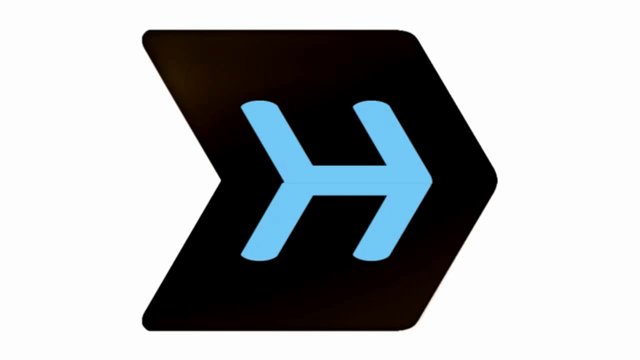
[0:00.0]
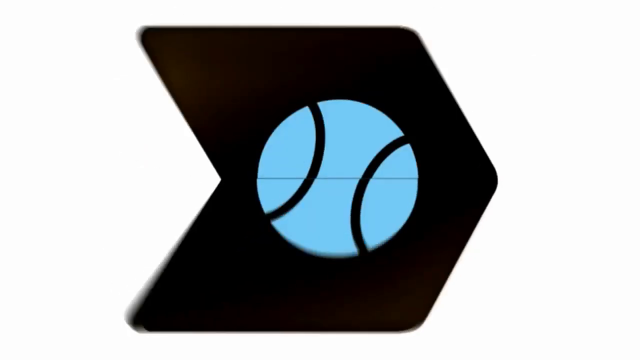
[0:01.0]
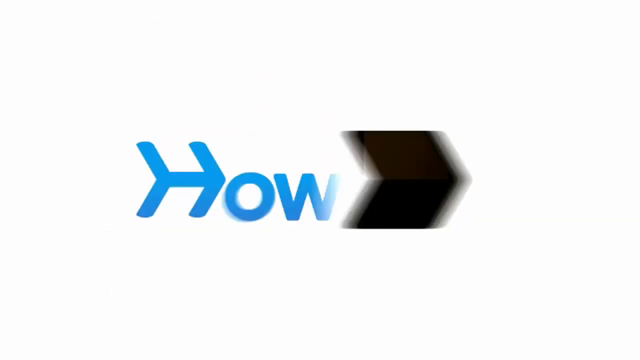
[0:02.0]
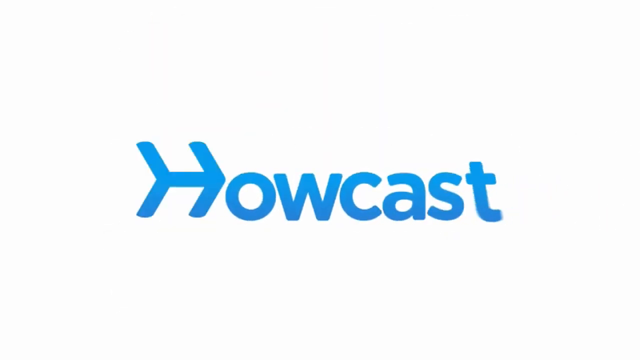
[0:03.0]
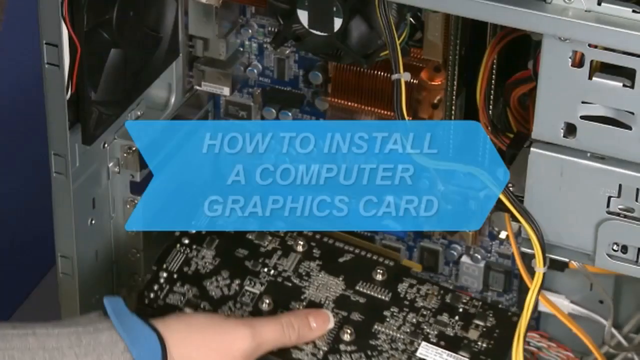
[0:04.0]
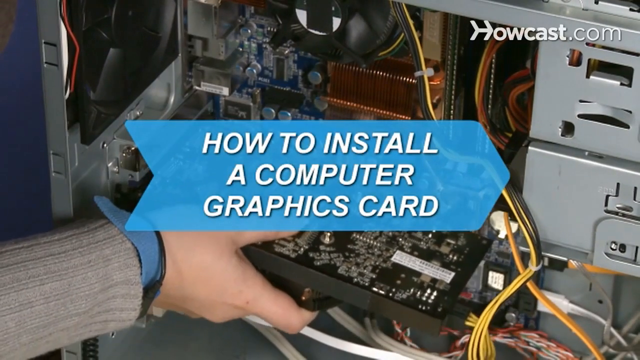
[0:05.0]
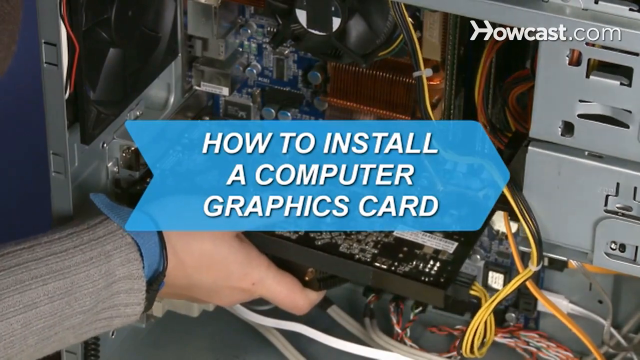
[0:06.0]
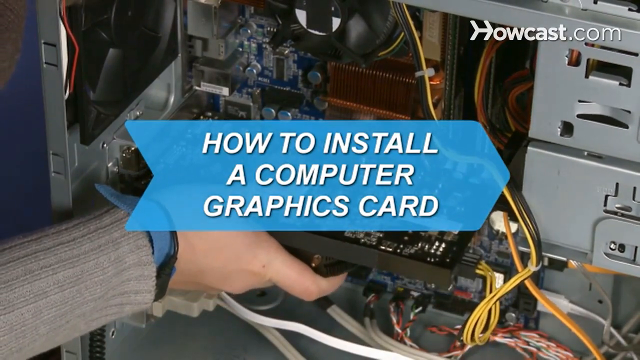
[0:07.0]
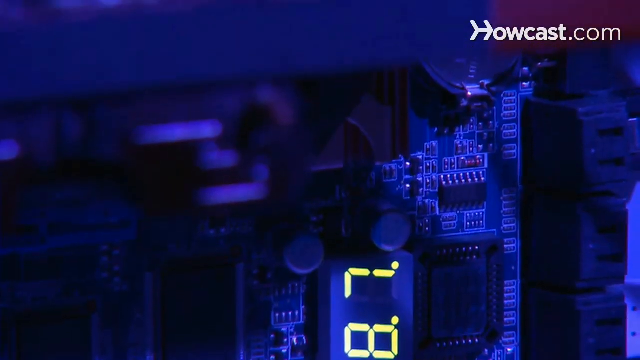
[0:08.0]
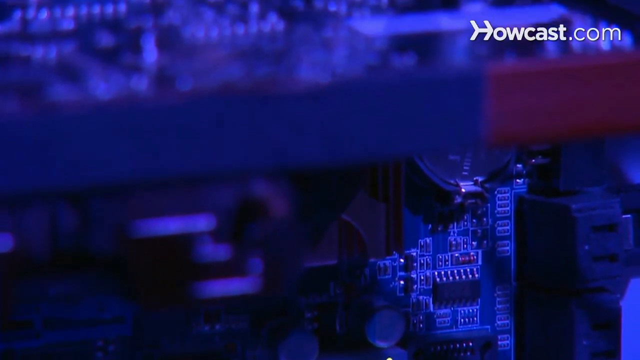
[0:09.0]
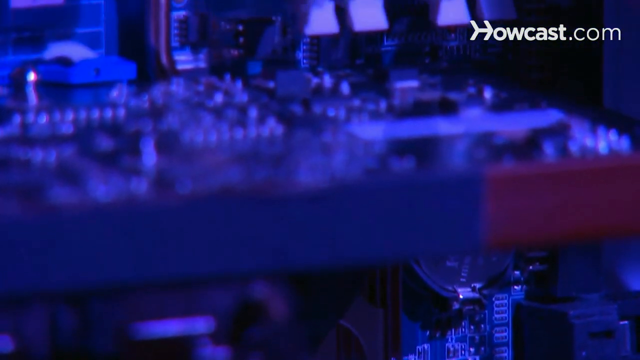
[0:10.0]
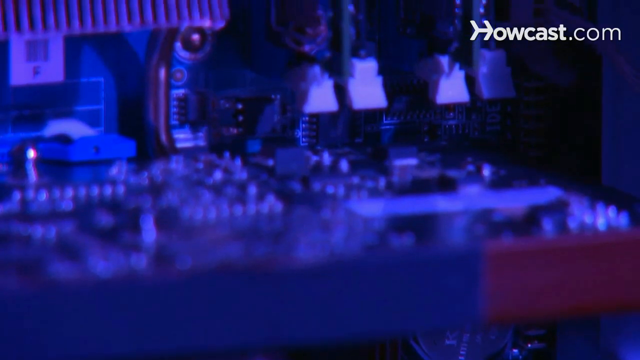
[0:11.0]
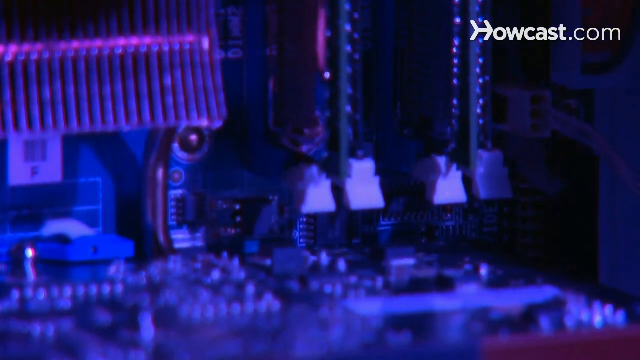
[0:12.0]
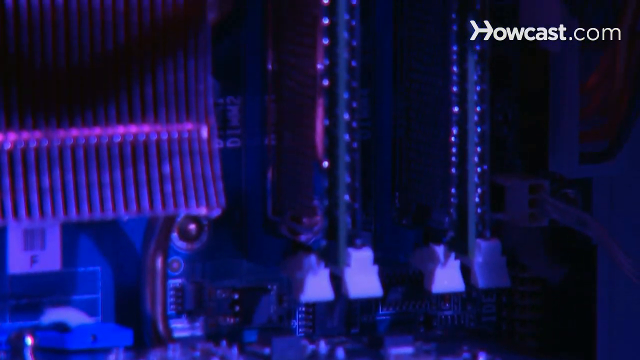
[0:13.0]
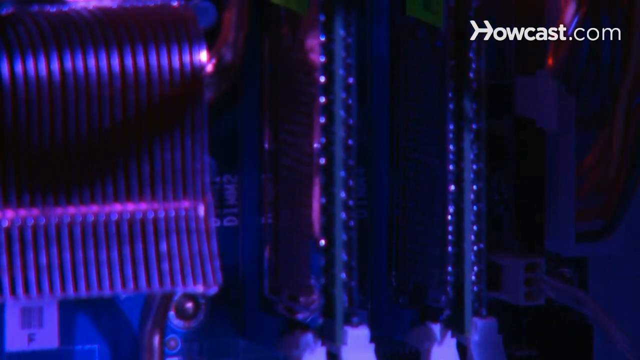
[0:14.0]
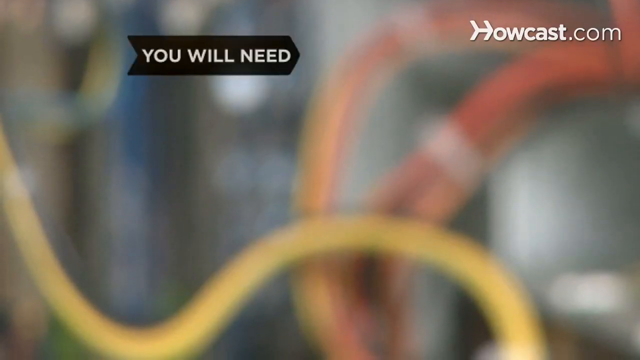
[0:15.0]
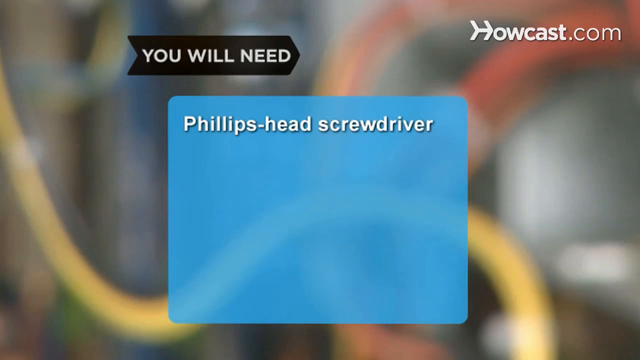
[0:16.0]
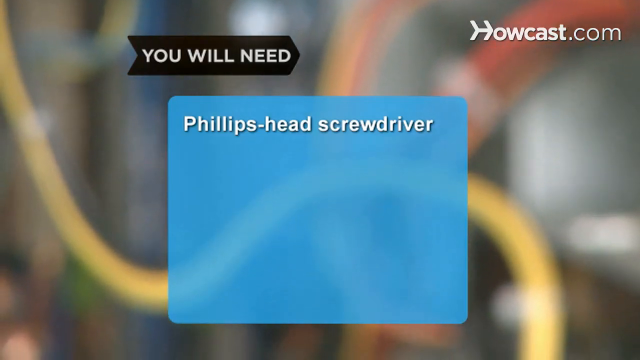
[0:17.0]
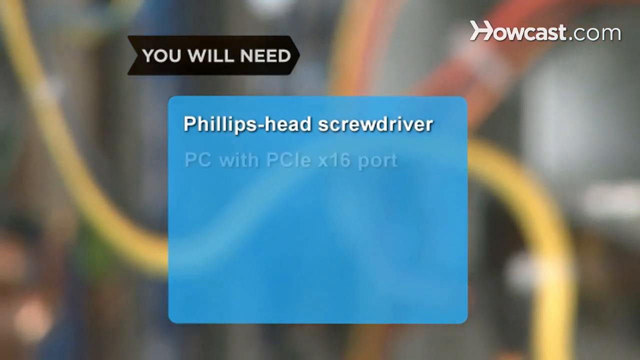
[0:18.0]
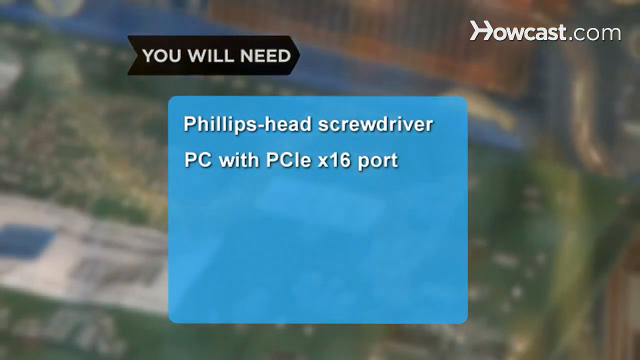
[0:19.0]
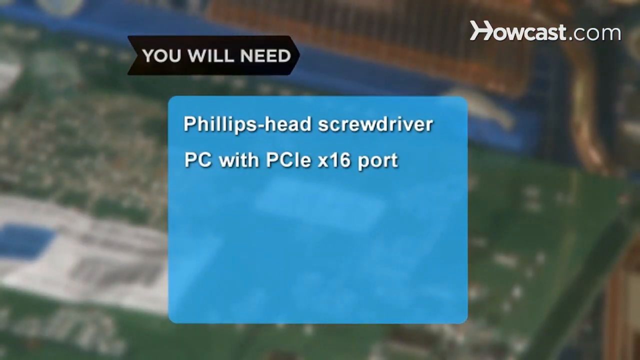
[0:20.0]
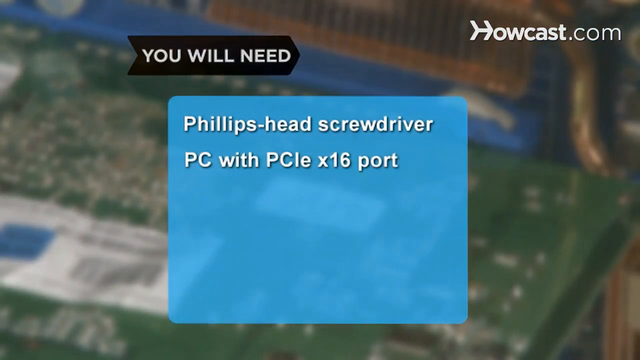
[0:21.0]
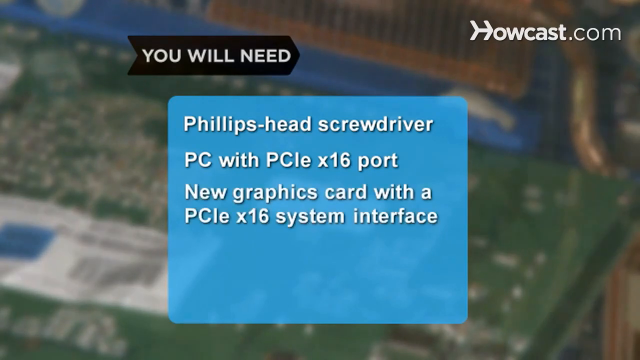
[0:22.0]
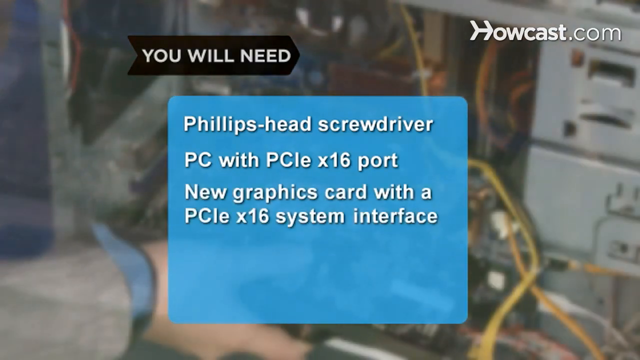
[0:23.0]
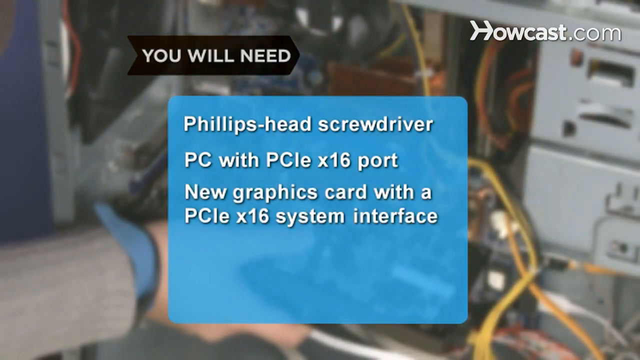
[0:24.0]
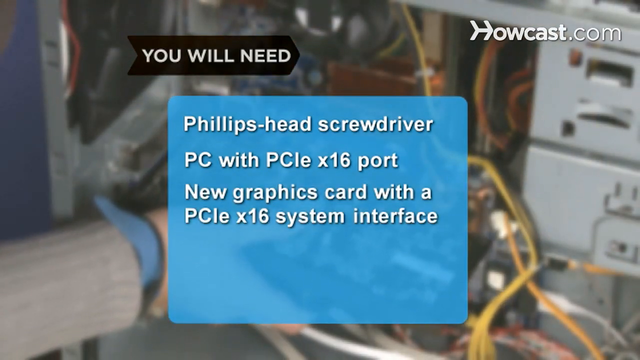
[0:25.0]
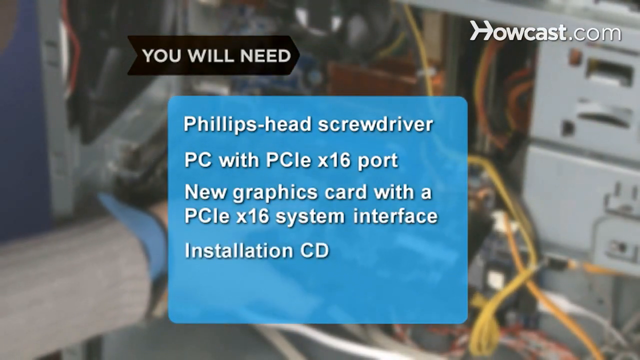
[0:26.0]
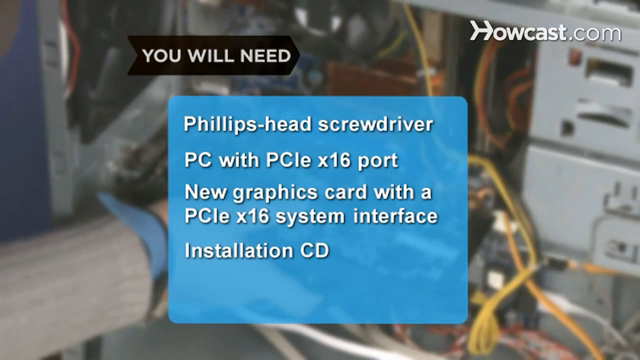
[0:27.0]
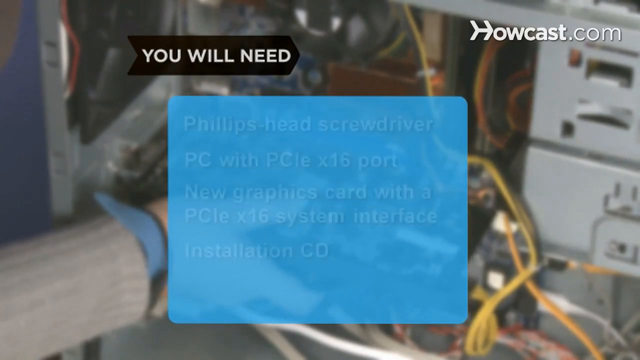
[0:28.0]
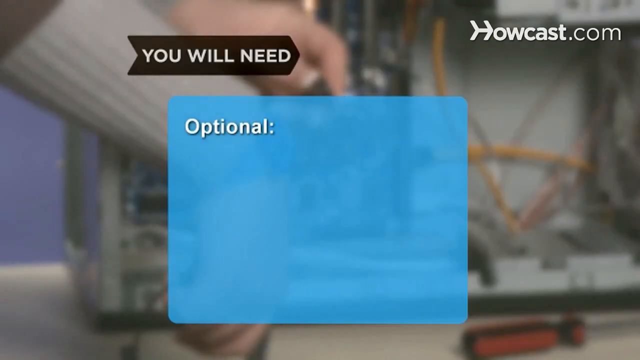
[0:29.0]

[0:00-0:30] A Howcast advert about computers shows computer components, such as a system unit, while the camera moves all around them. A list of the computer's specifications is also shown.